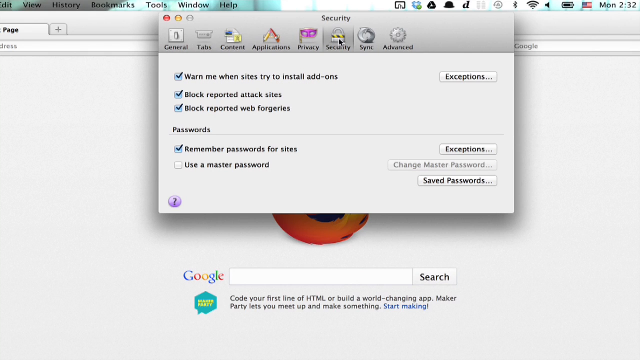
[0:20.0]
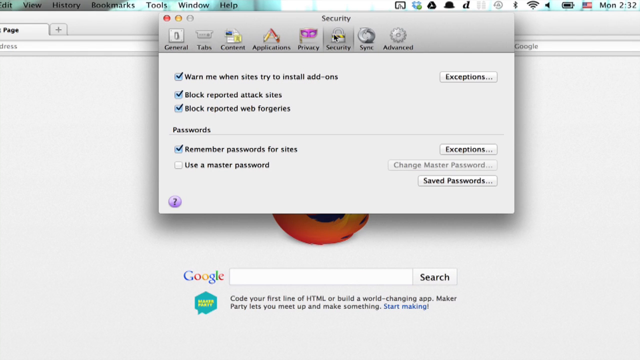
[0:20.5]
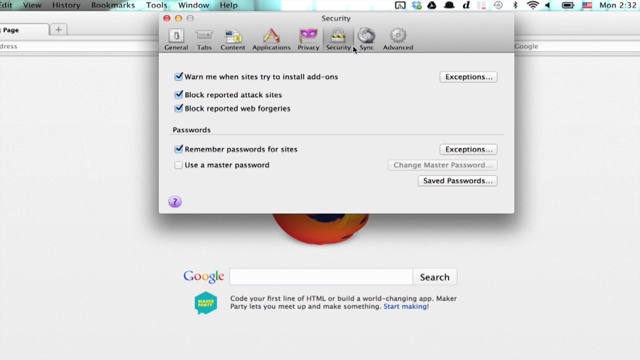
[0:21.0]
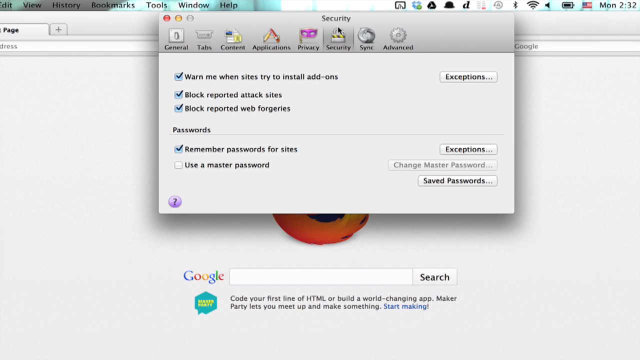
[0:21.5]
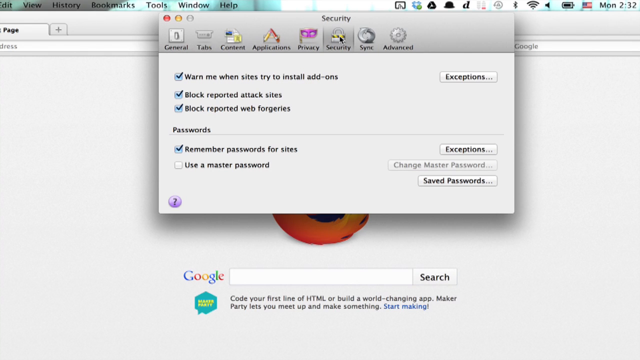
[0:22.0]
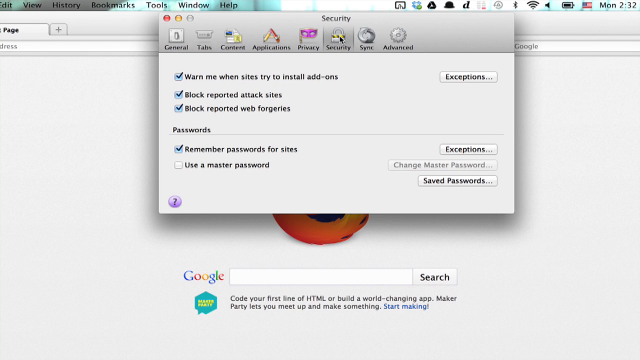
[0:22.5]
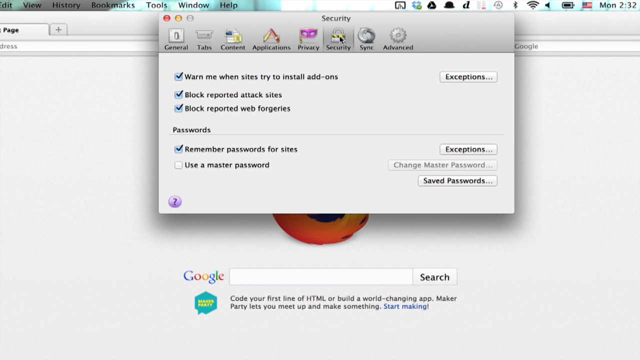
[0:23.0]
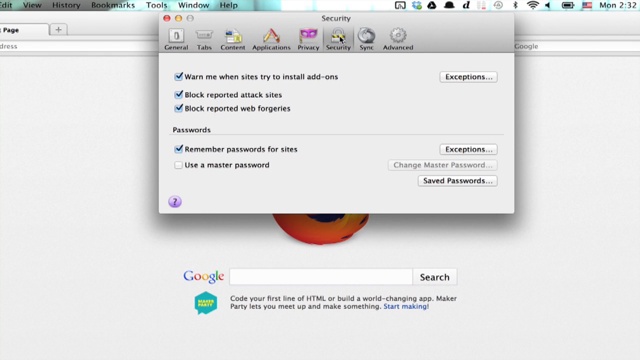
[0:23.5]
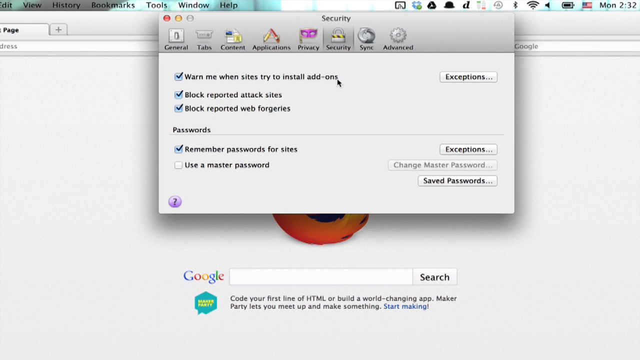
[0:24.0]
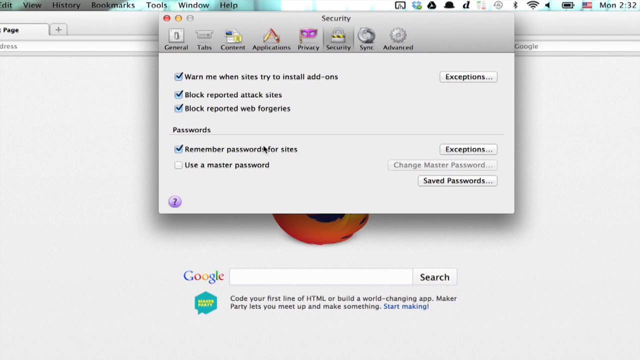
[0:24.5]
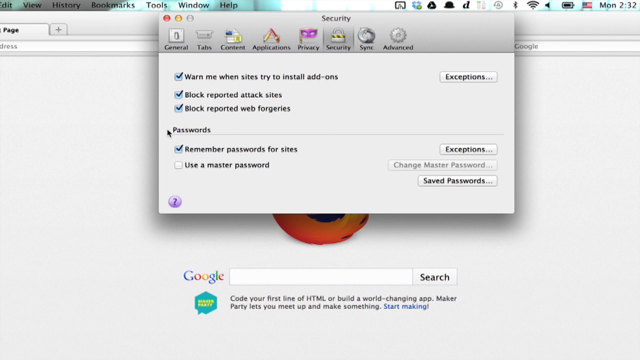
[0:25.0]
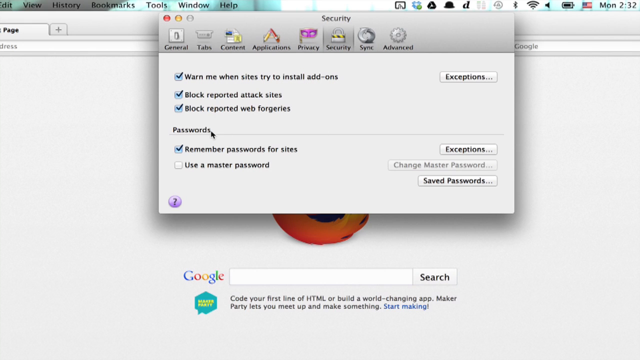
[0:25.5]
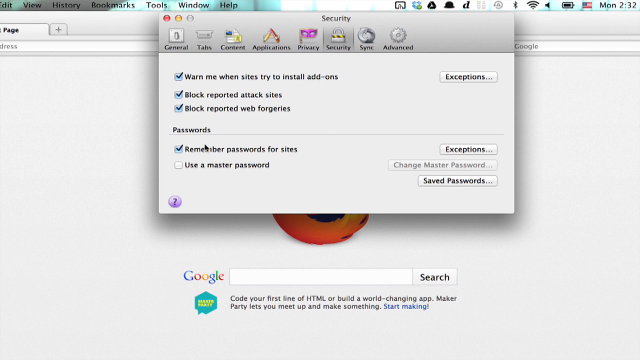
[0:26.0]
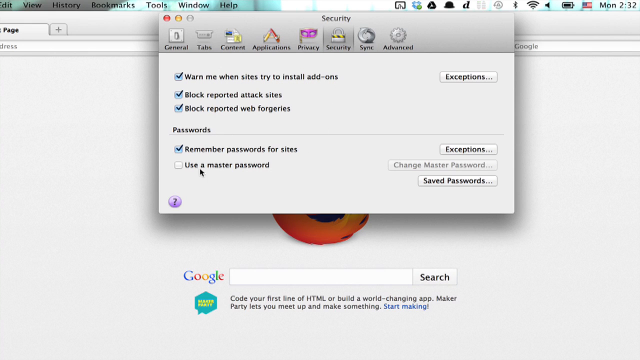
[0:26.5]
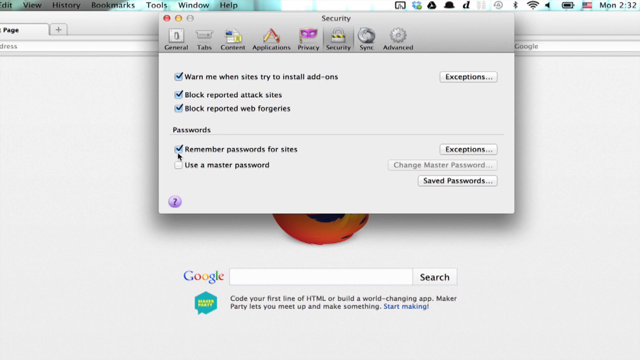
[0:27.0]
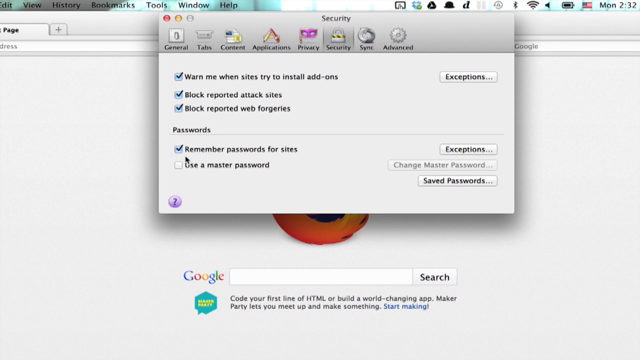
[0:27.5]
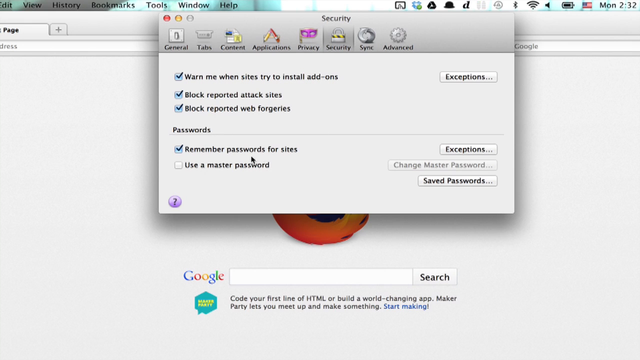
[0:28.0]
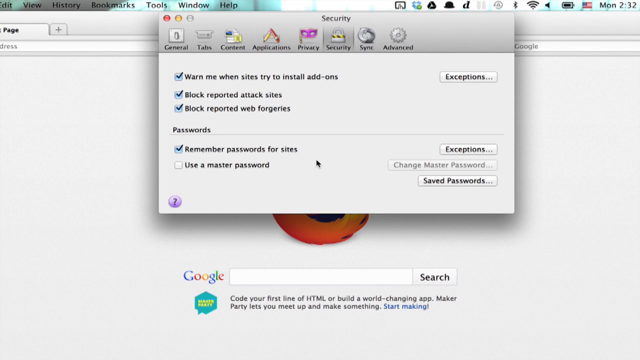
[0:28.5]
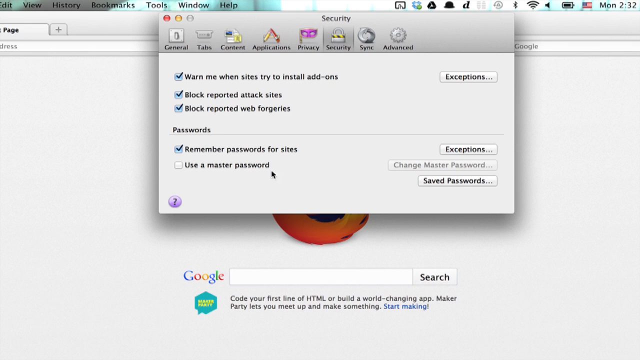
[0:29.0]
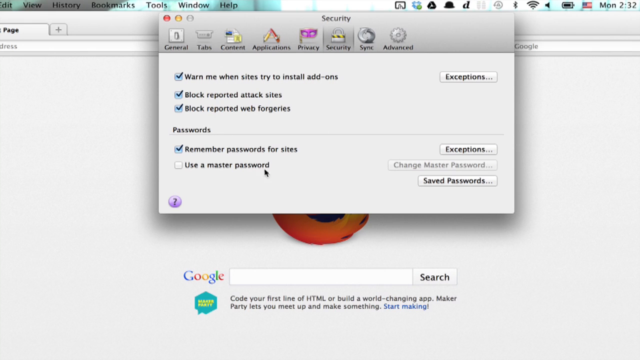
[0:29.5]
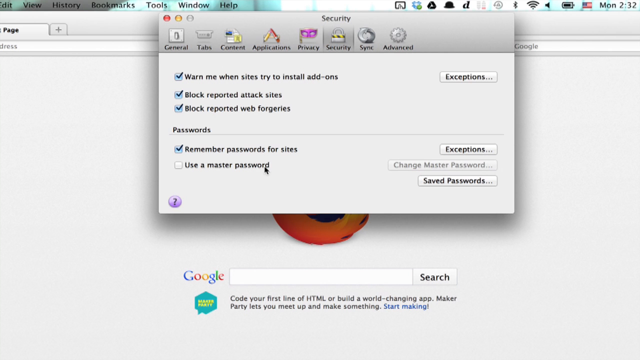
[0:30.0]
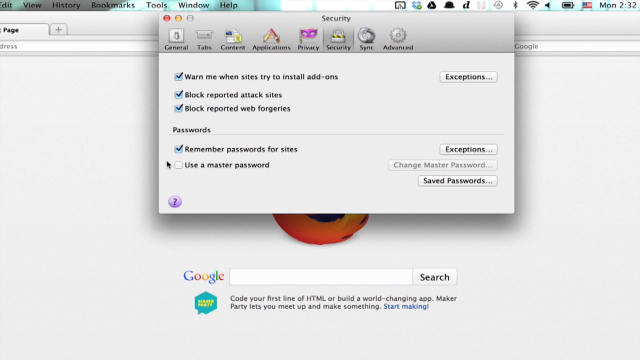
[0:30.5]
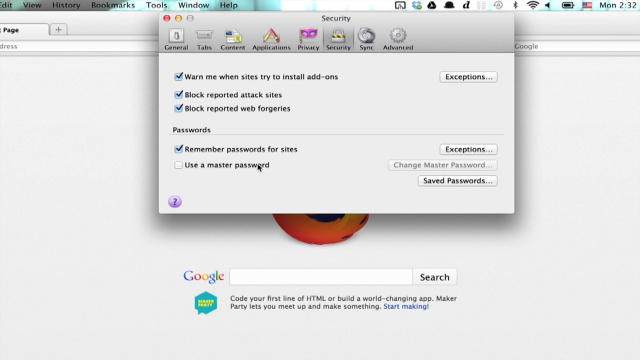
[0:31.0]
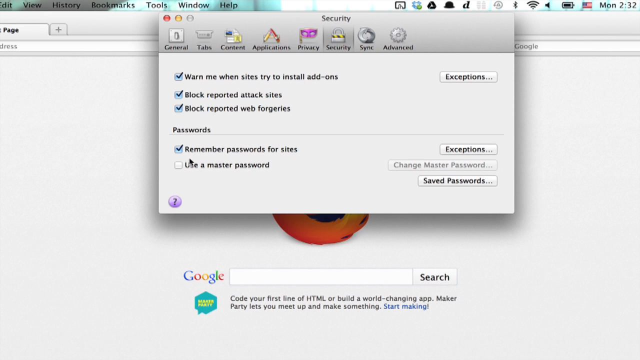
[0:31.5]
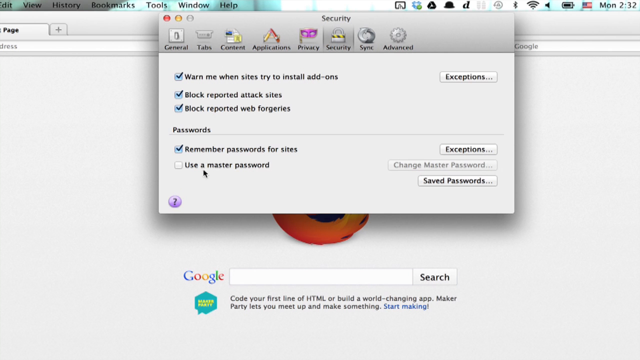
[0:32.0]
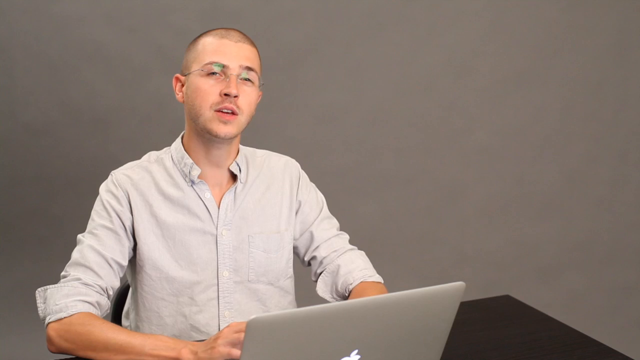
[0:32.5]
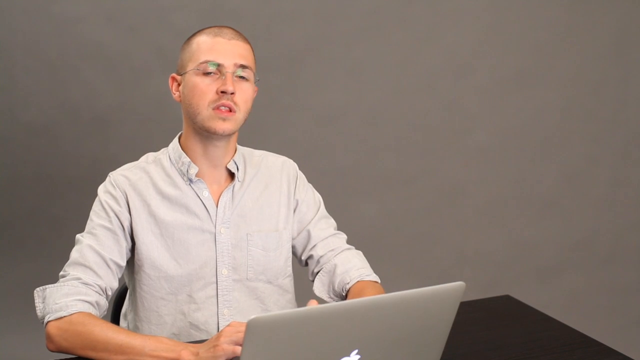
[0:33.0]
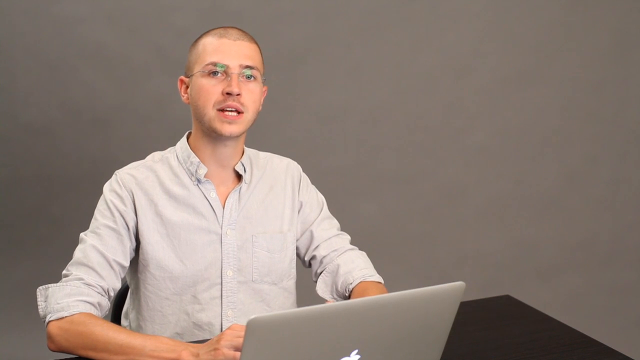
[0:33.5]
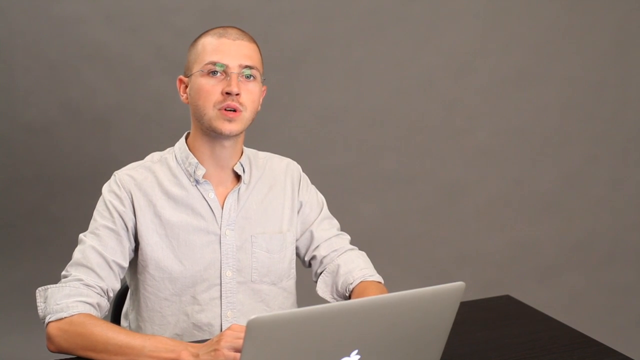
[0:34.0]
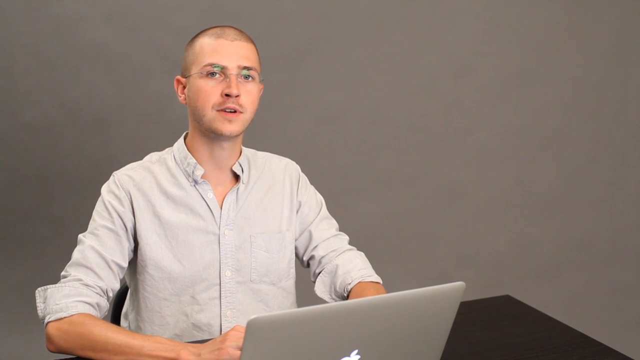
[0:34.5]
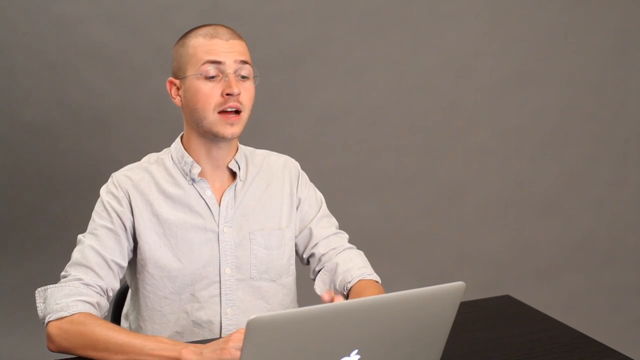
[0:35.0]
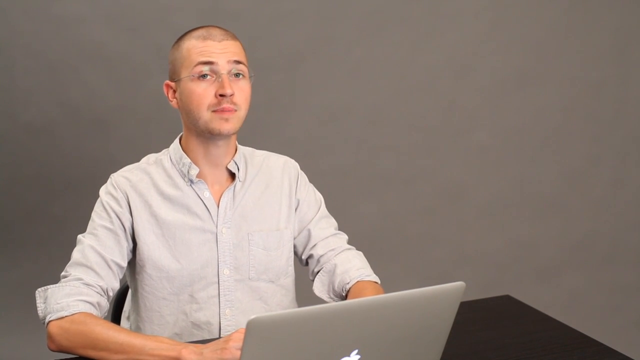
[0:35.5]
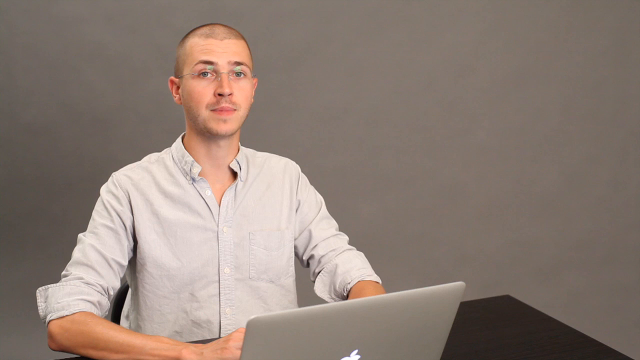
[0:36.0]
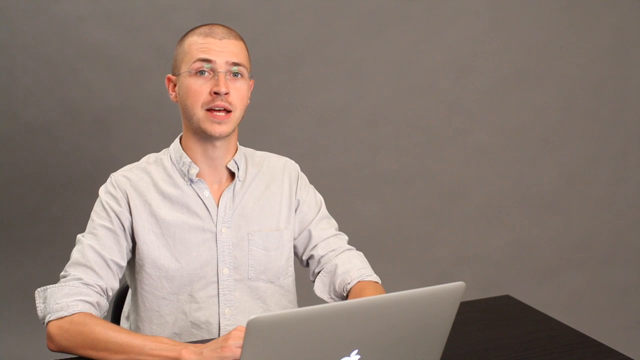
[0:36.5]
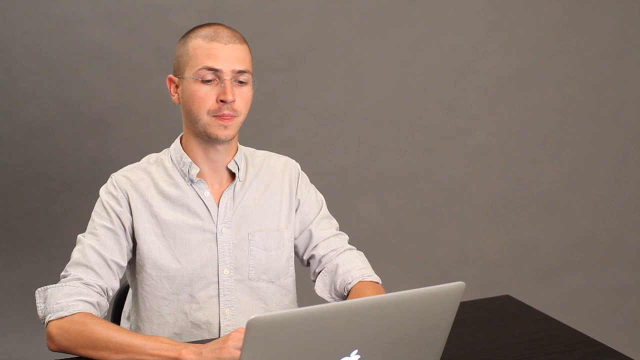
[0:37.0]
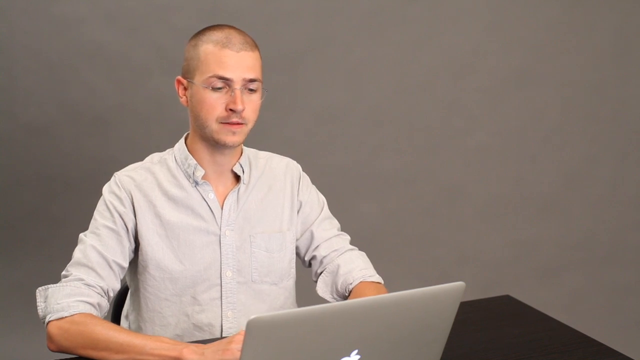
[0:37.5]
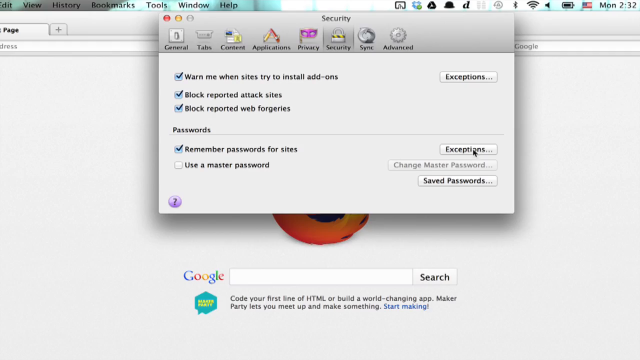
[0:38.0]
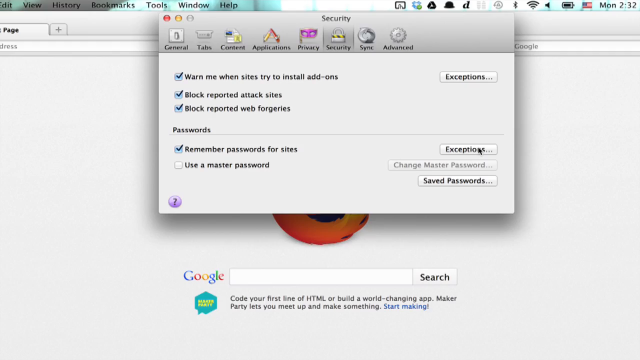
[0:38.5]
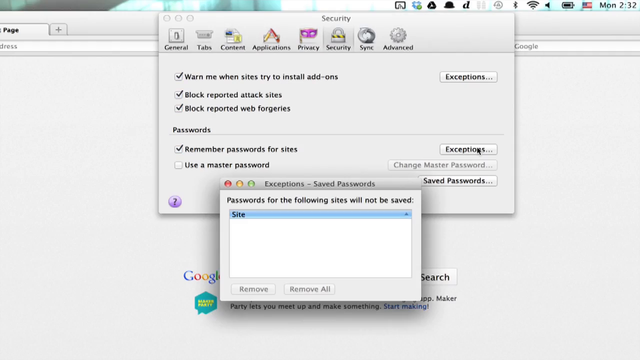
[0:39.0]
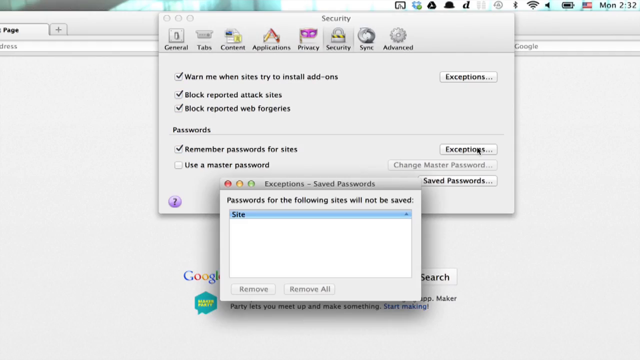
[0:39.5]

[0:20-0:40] The man appears to be showing how to save a password for a website, though this is not entirely certain.